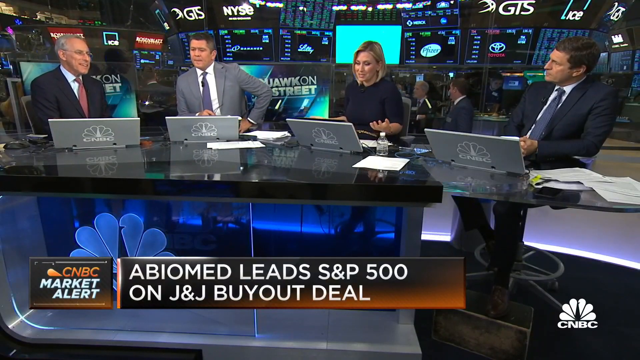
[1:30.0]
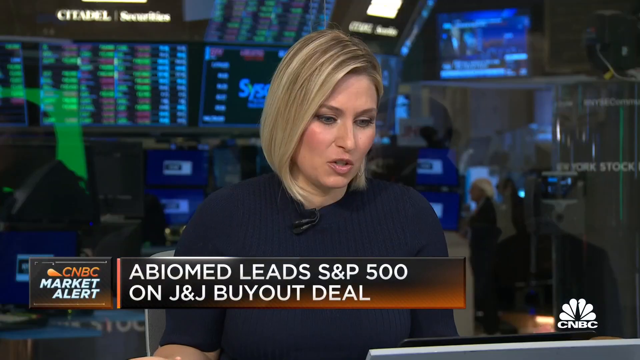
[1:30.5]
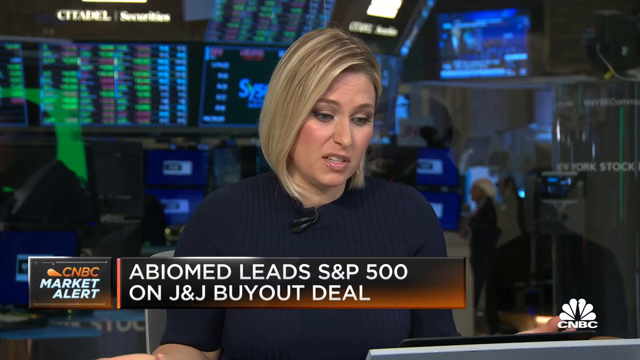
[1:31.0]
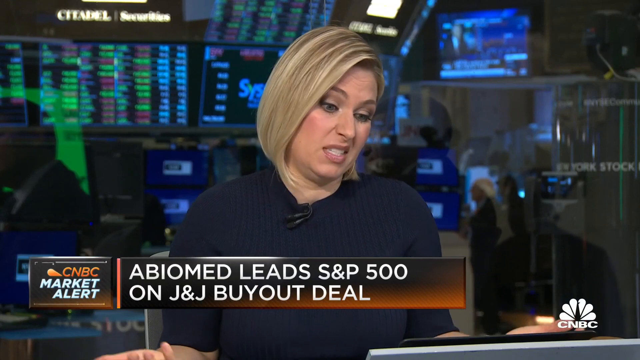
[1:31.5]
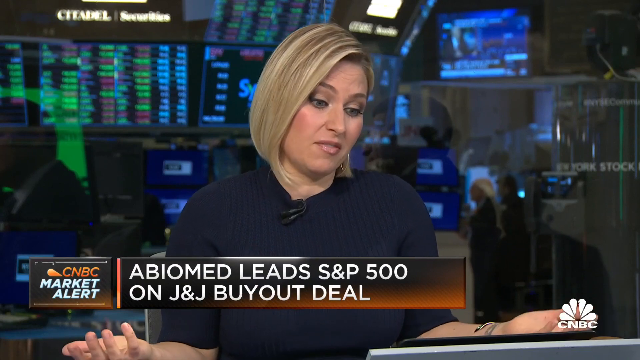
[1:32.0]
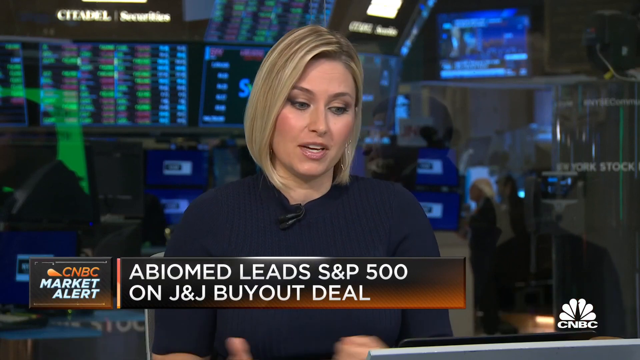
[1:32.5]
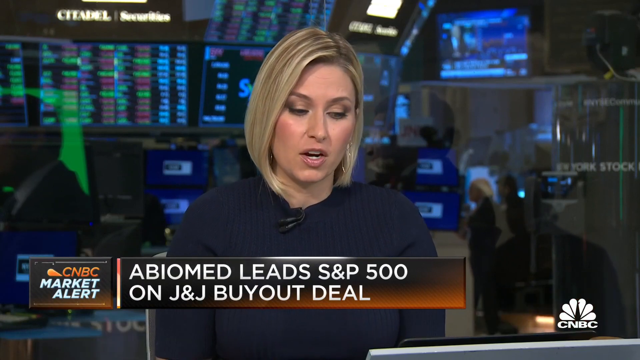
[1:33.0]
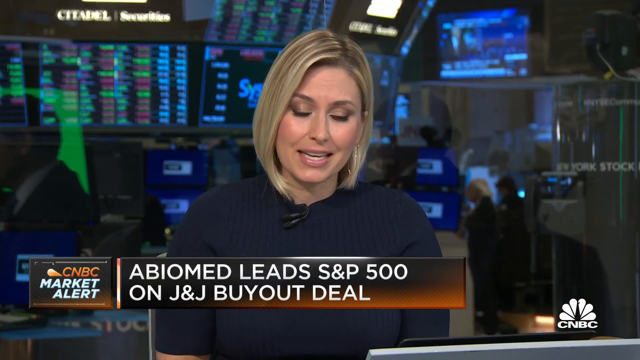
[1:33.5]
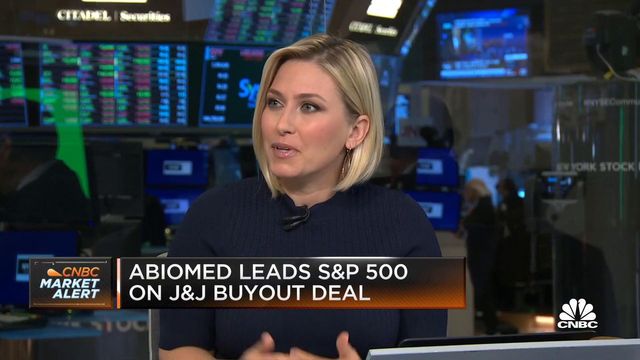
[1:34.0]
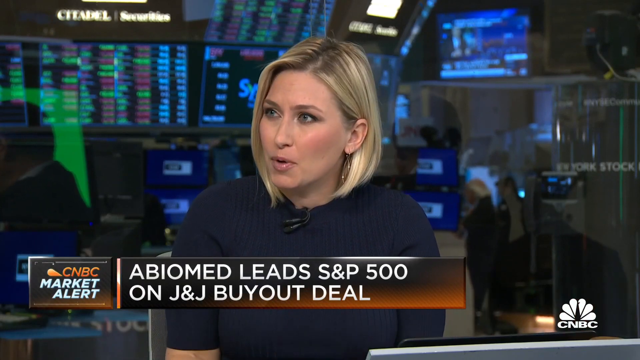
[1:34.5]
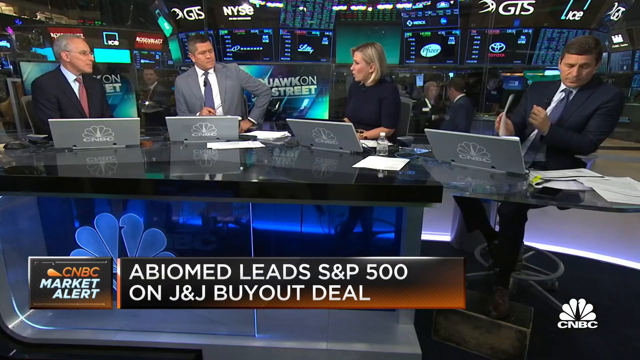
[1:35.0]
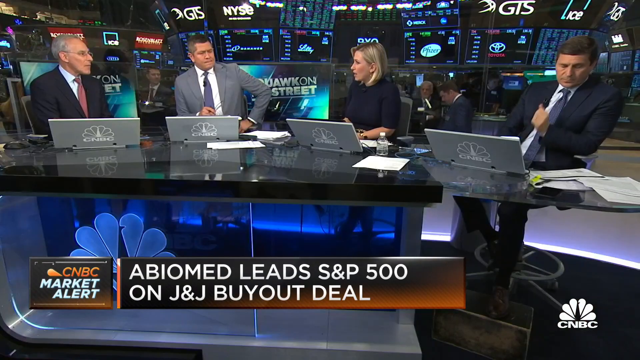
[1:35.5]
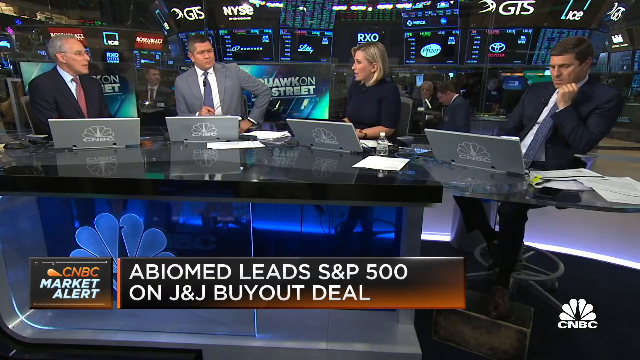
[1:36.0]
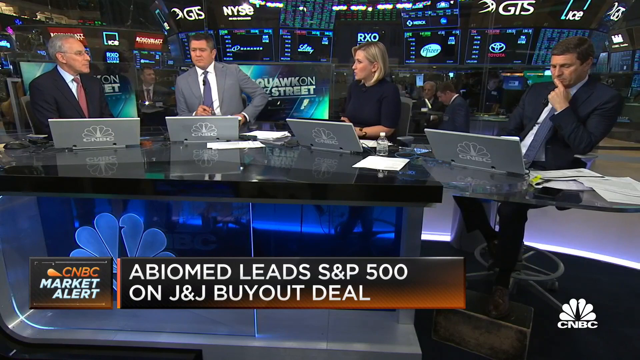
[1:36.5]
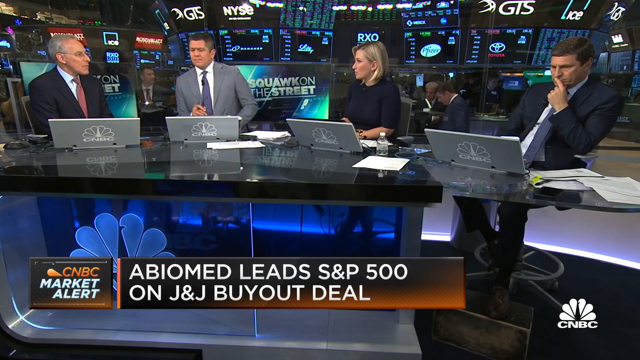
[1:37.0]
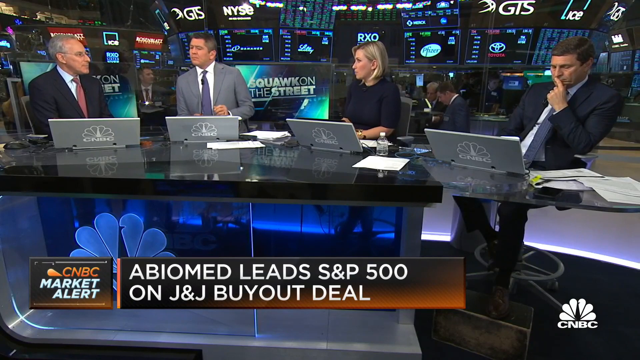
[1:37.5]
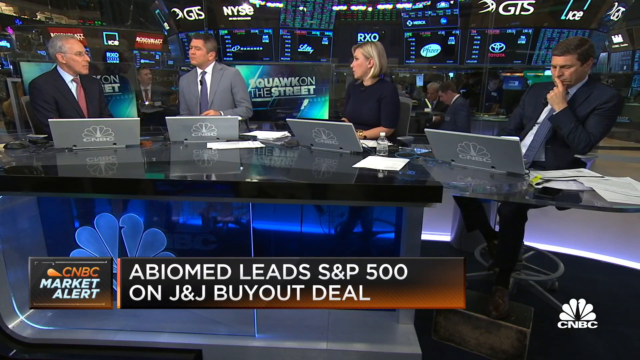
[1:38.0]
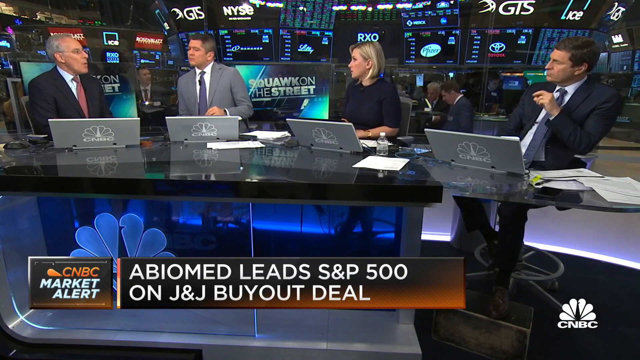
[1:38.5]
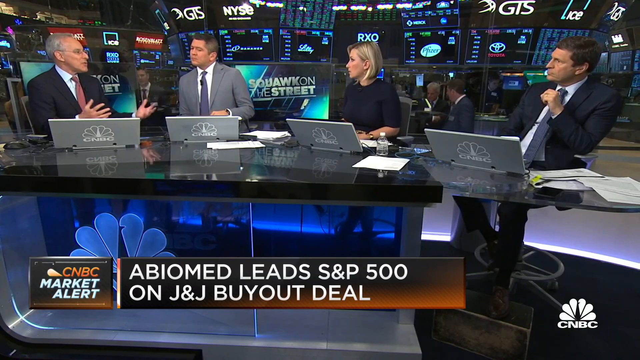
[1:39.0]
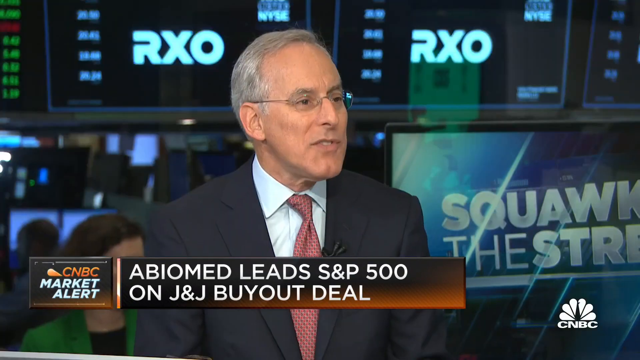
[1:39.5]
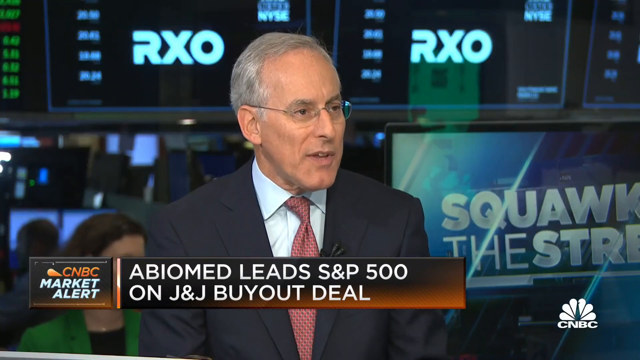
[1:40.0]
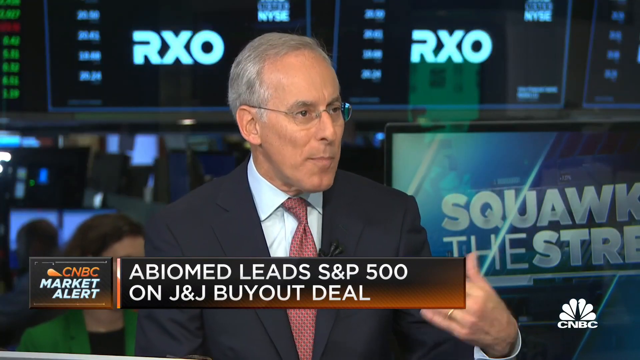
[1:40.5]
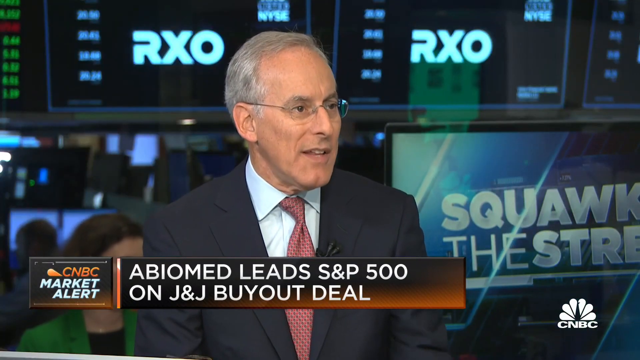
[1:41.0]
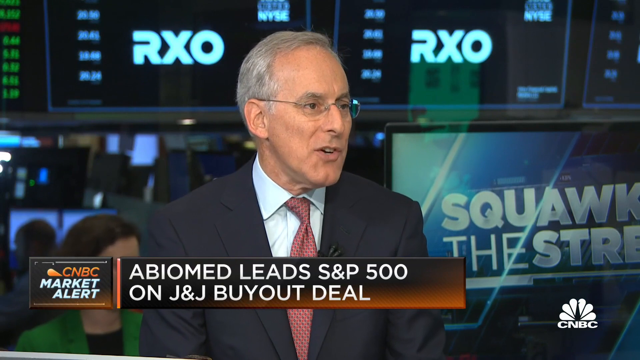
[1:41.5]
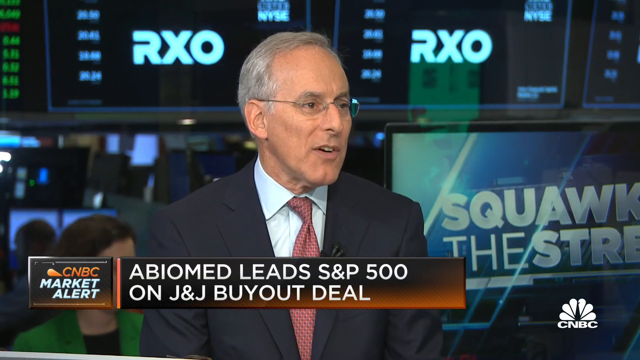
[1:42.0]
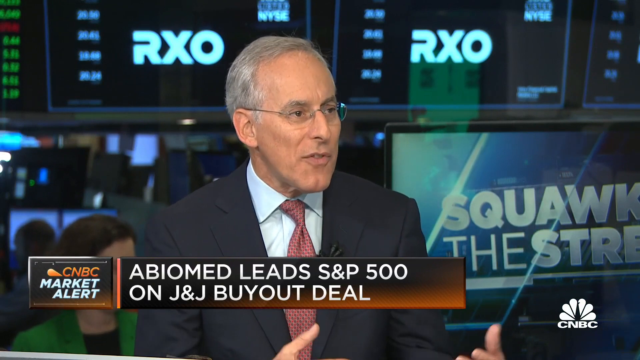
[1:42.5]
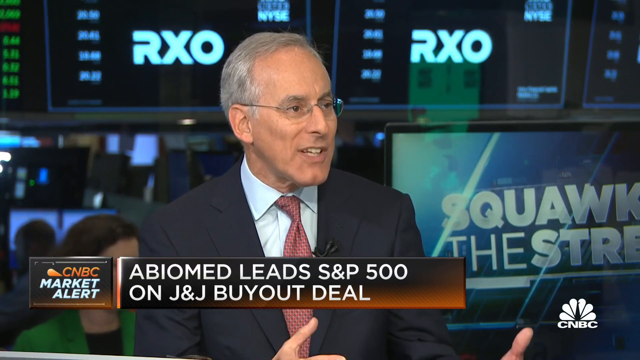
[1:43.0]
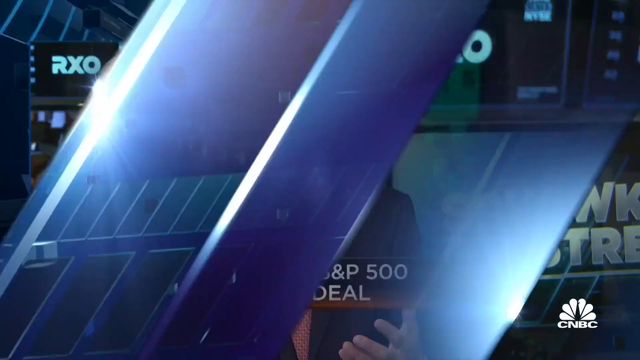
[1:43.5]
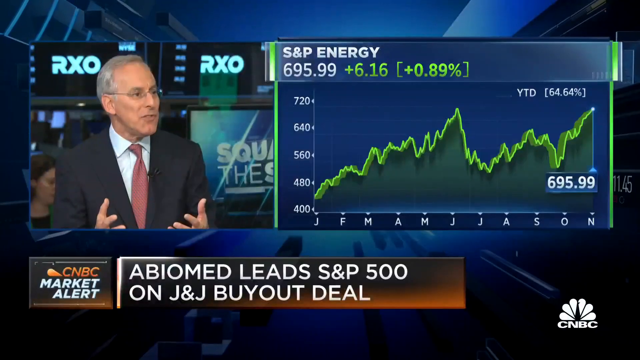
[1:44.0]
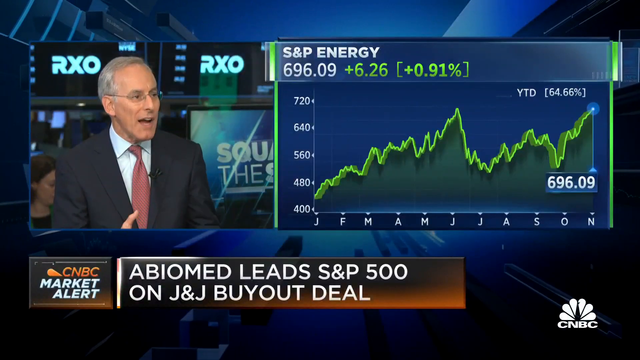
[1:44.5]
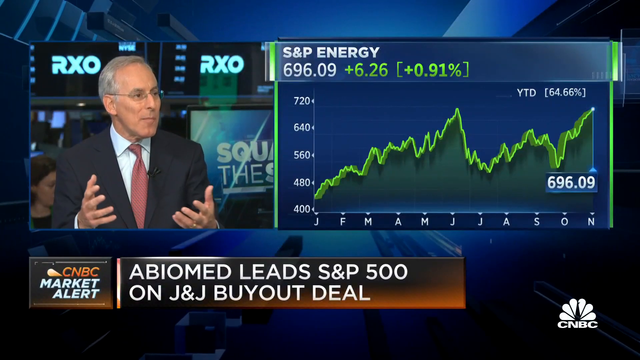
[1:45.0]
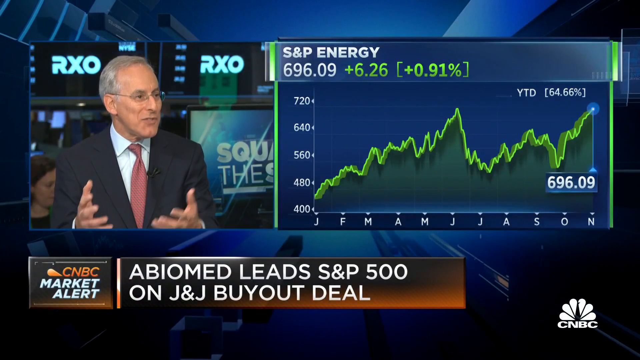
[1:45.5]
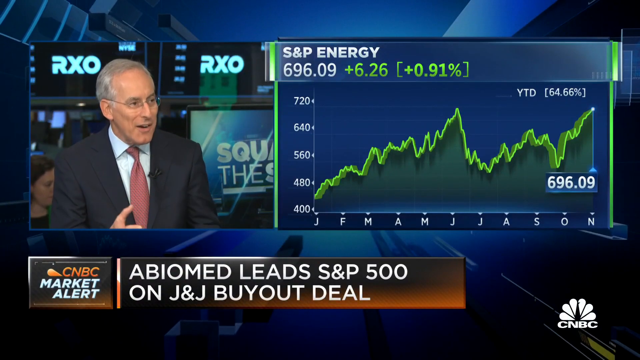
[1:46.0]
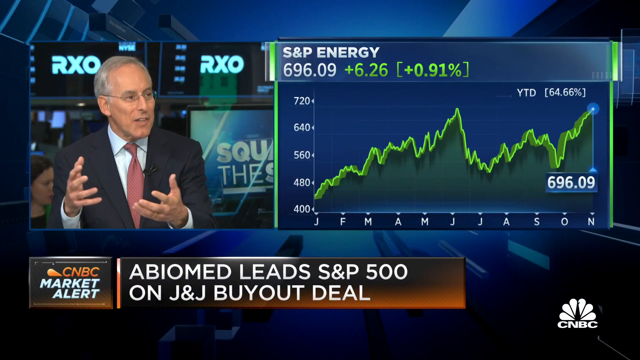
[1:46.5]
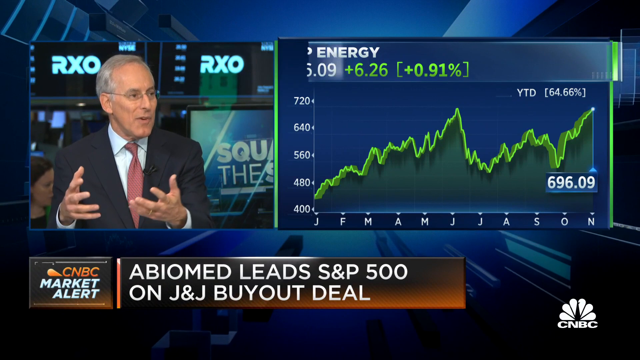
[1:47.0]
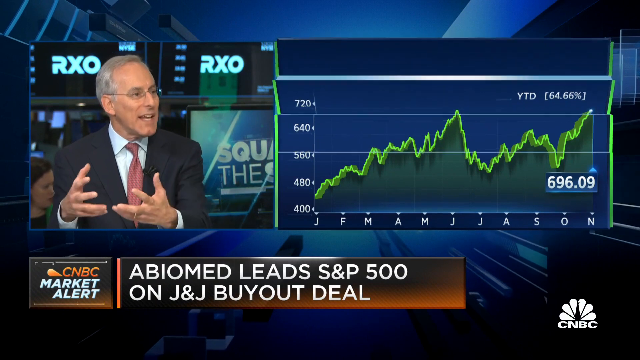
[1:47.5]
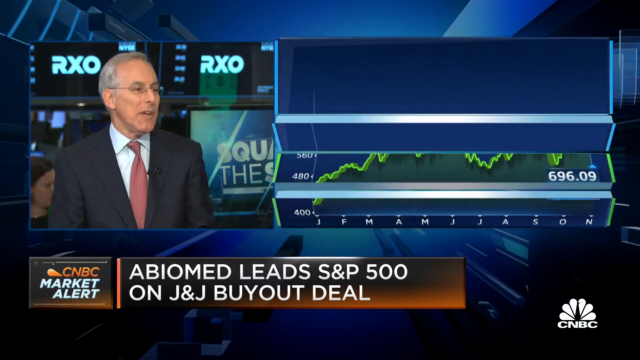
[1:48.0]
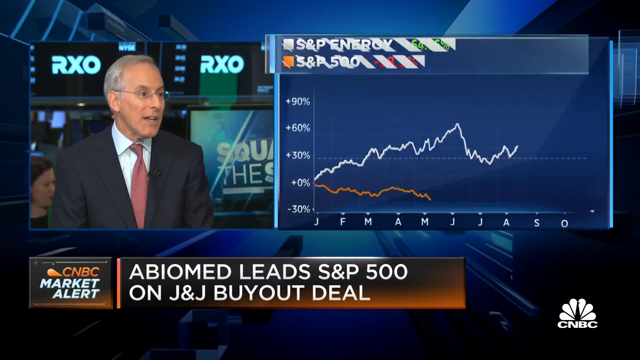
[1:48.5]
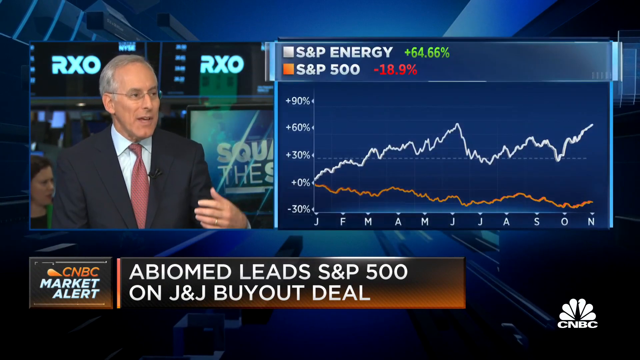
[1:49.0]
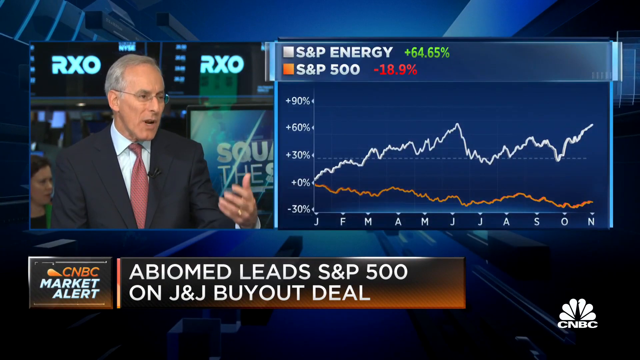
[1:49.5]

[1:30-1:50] The woman on the panel talks; she has blonde hair and blue eyes and wears a blue dress with a microphone on the top of it. She seems to be looking at a paper. She talks to David, and he talks back. S&P Energy is shown up almost 1%, with year-to-date at 64.66, on a graph where the green points up. Another comparison shows S&P Energy up almost 65% while the S&P 500 is down almost 19%, also with a graph. Laptops are on the table along with lots of paperwork and water bottles.